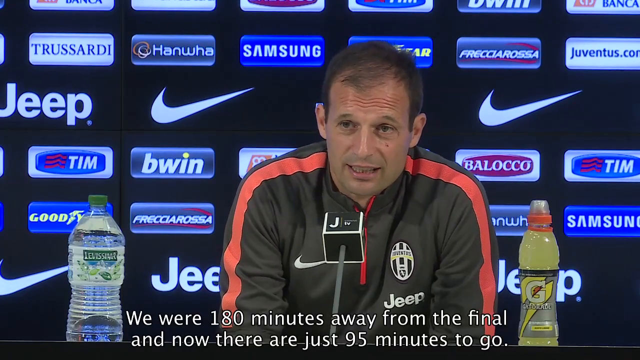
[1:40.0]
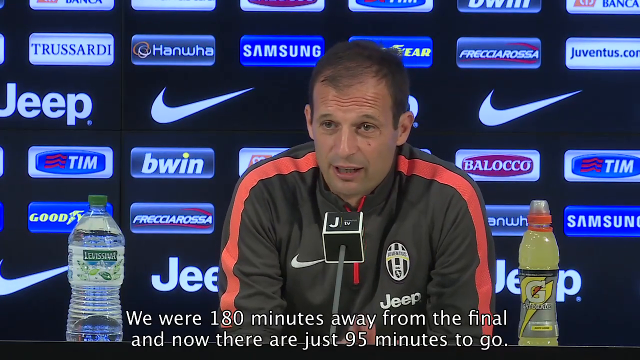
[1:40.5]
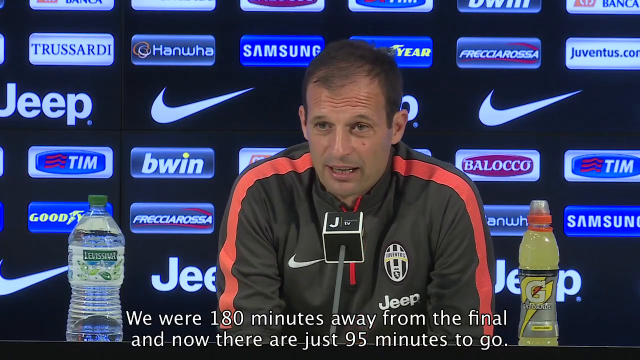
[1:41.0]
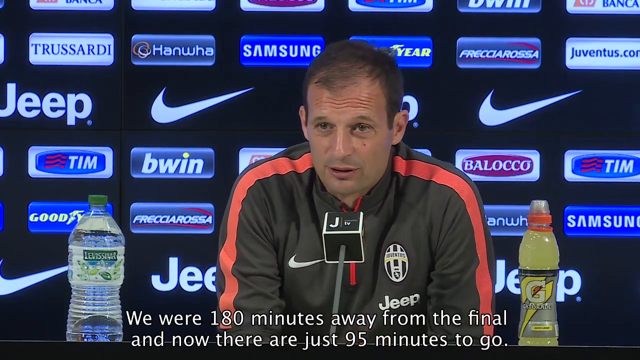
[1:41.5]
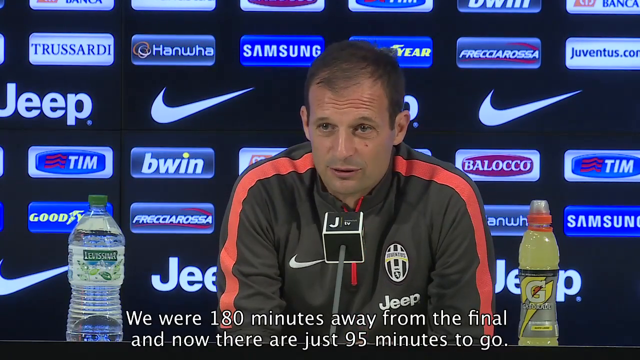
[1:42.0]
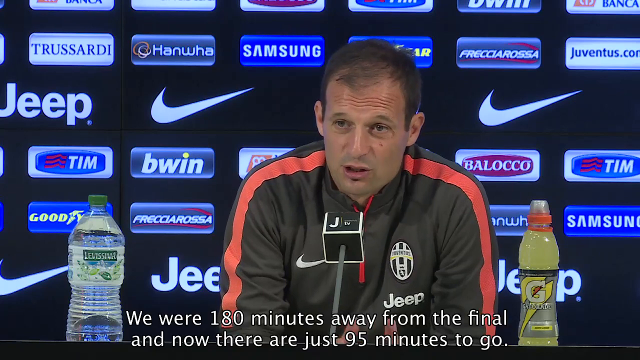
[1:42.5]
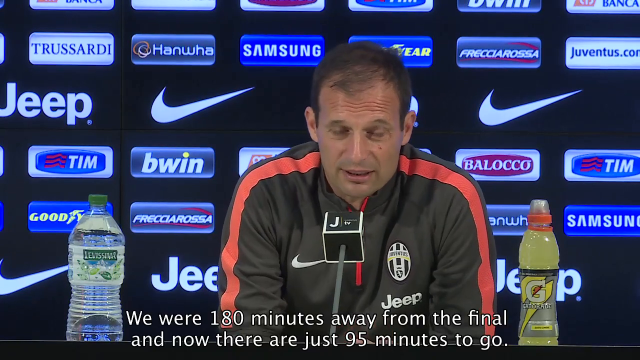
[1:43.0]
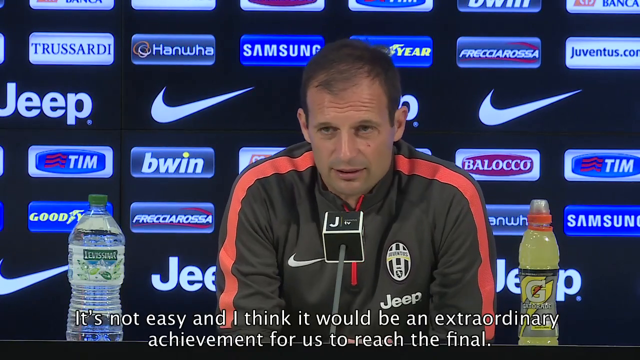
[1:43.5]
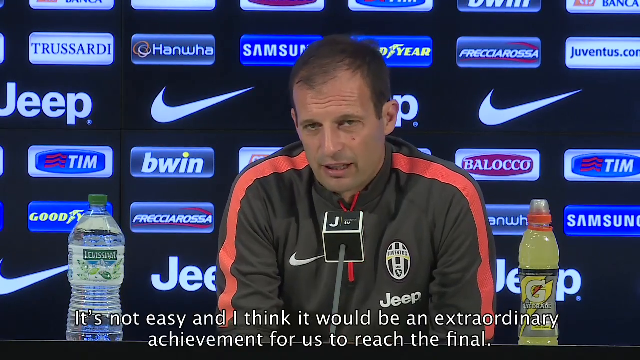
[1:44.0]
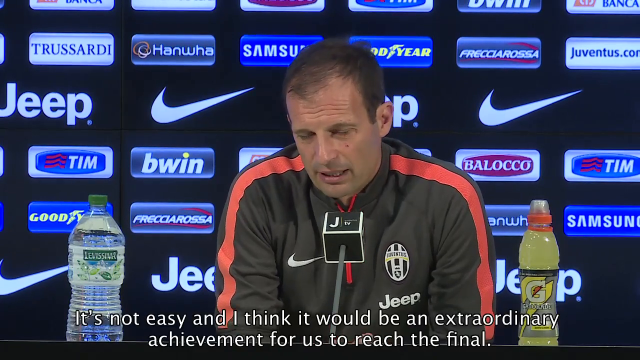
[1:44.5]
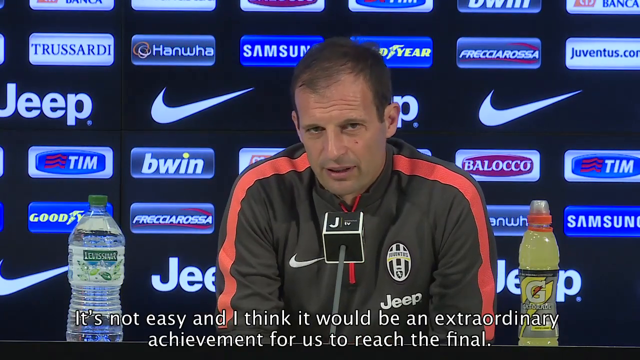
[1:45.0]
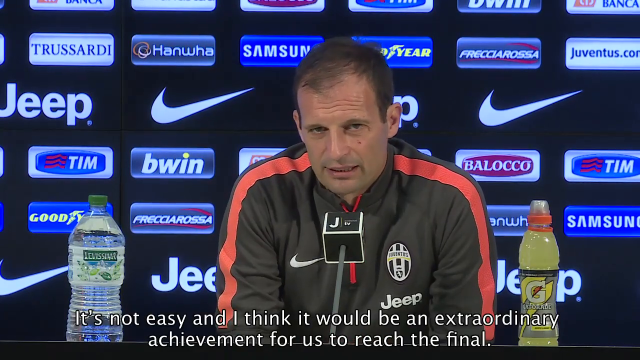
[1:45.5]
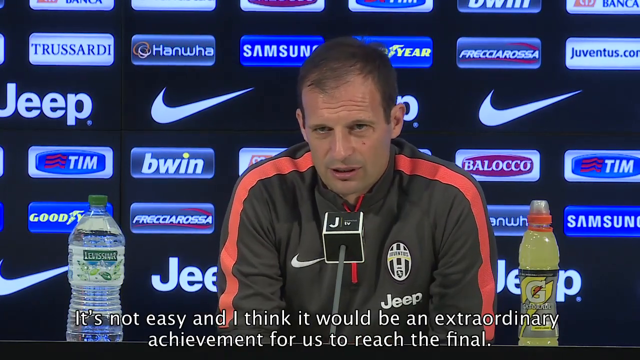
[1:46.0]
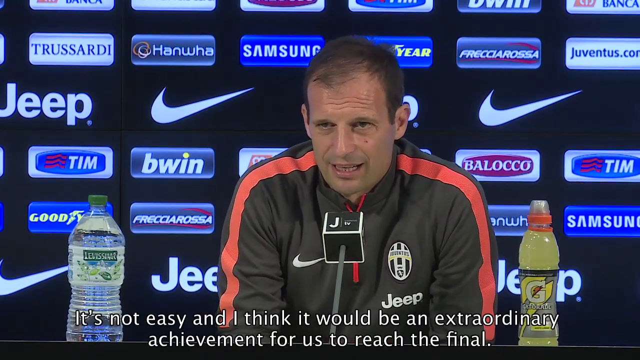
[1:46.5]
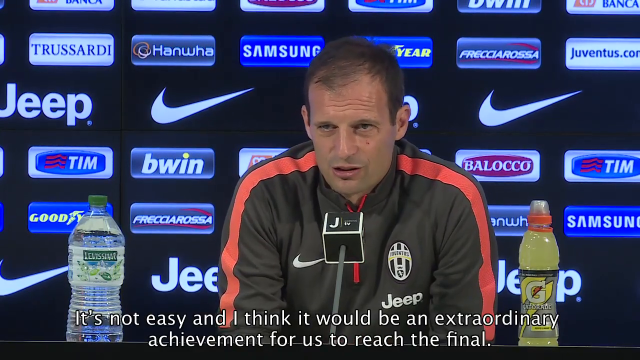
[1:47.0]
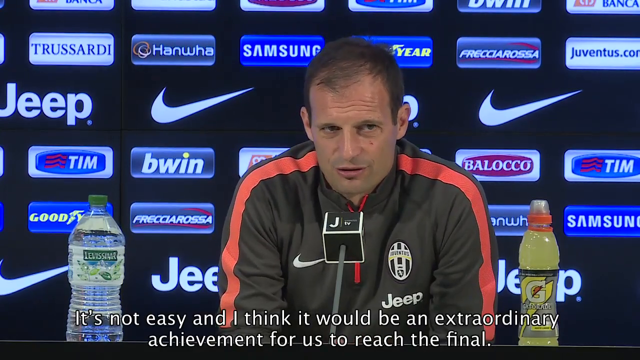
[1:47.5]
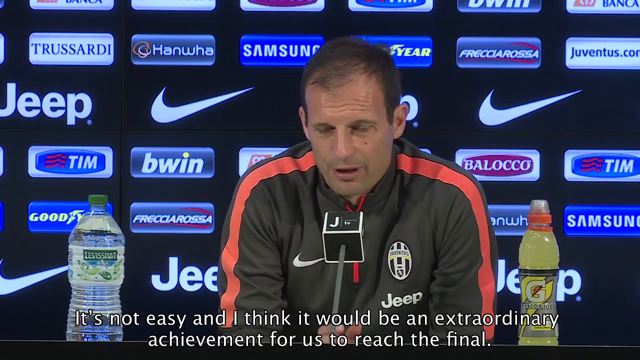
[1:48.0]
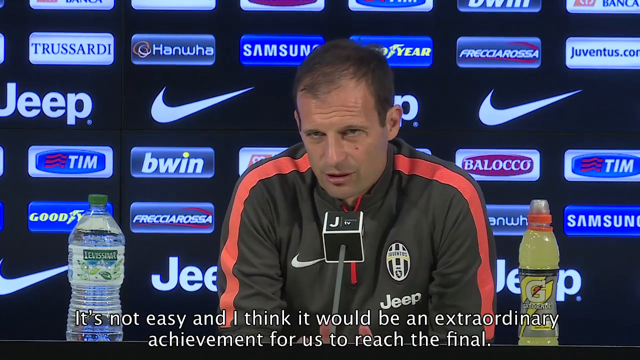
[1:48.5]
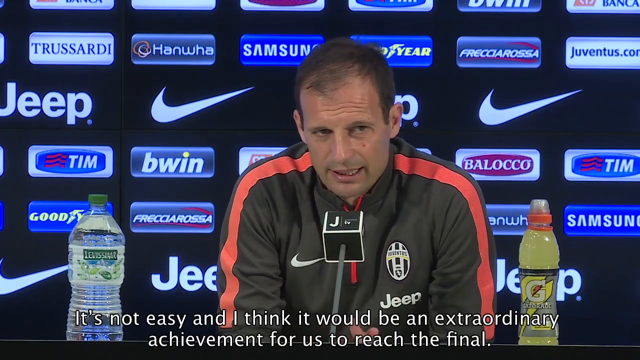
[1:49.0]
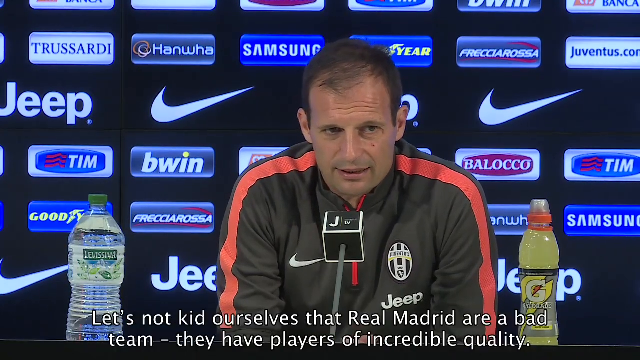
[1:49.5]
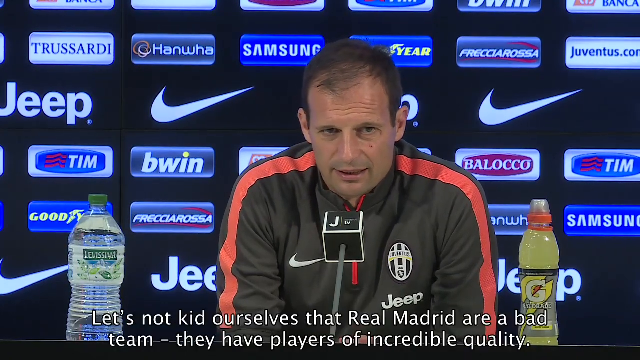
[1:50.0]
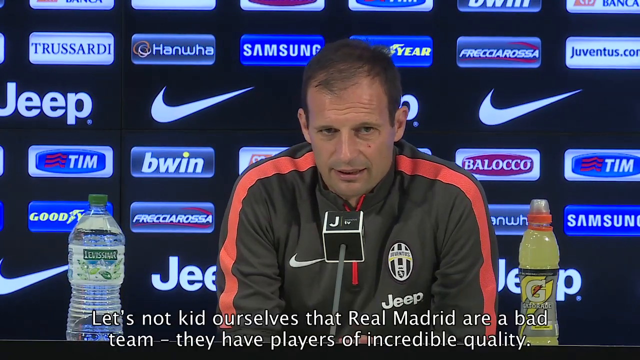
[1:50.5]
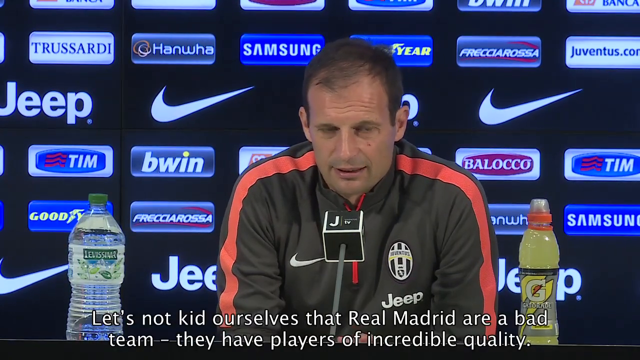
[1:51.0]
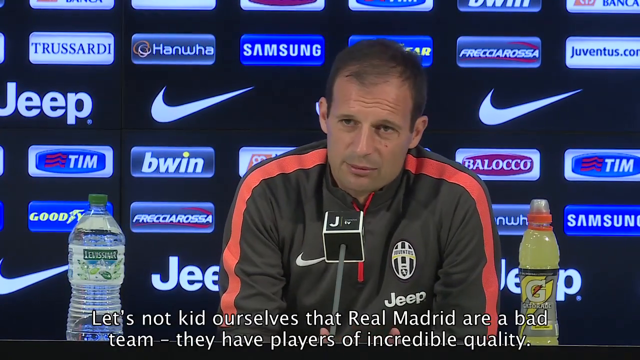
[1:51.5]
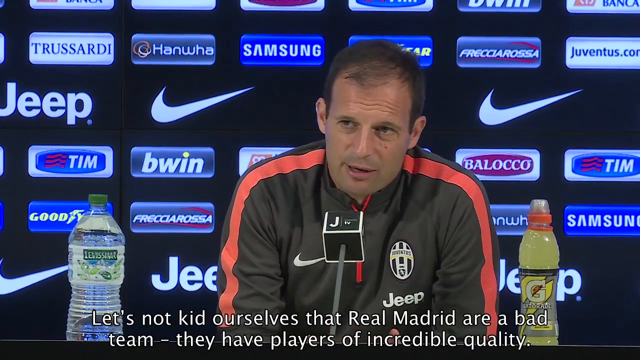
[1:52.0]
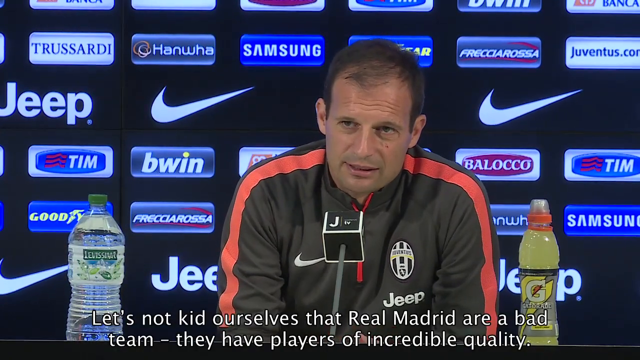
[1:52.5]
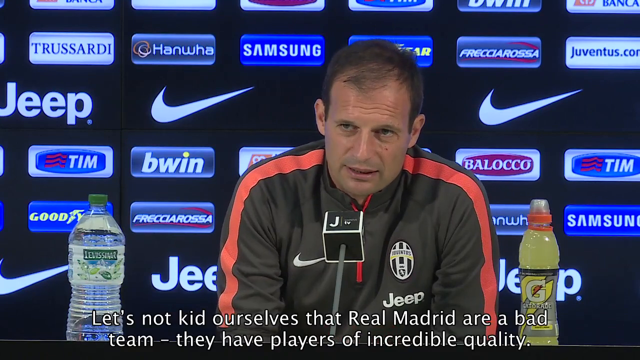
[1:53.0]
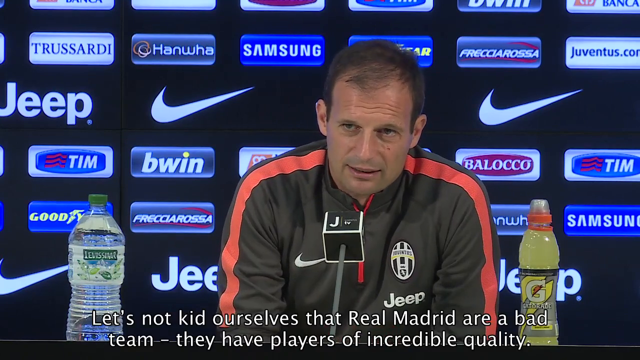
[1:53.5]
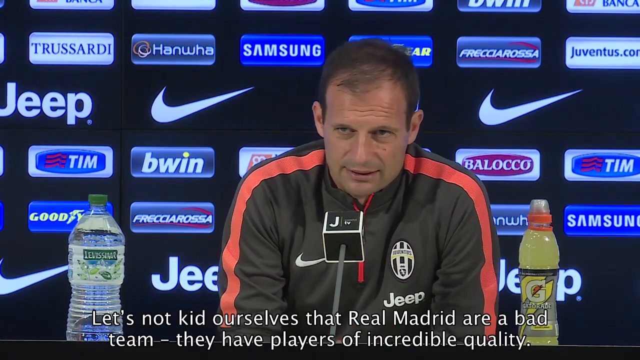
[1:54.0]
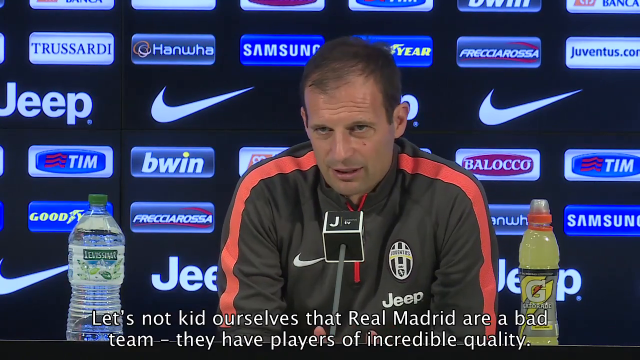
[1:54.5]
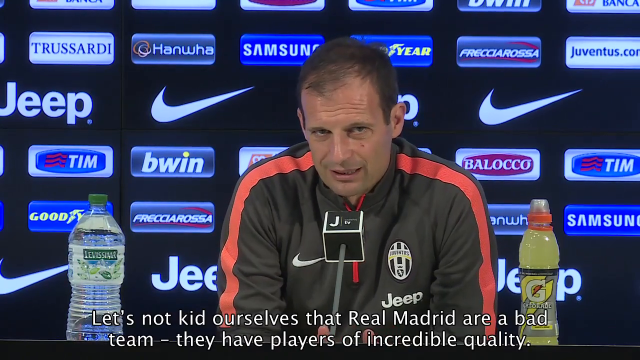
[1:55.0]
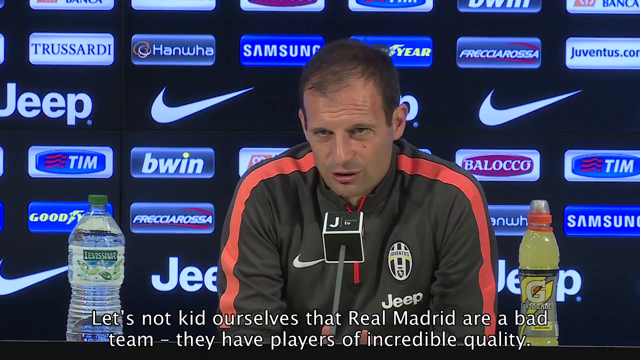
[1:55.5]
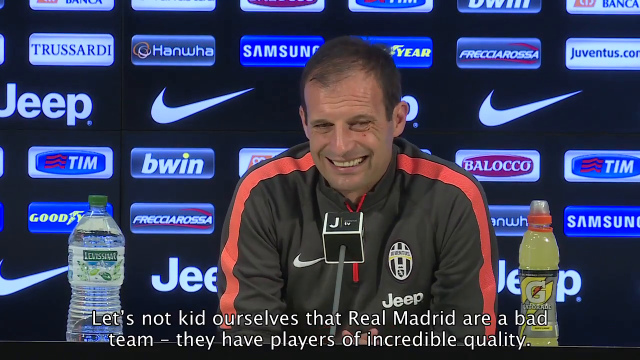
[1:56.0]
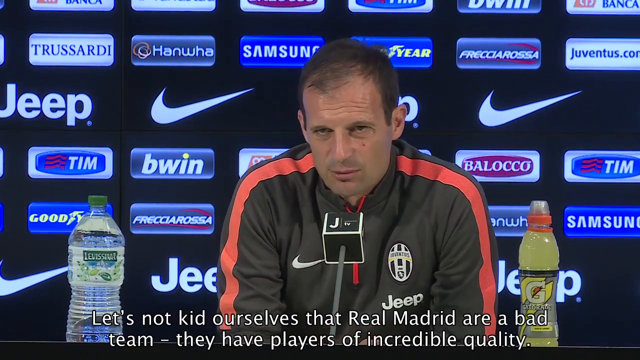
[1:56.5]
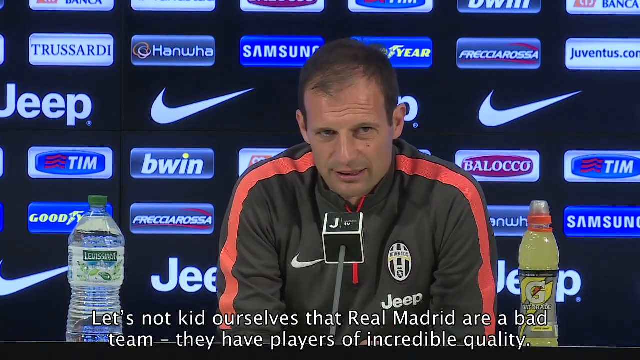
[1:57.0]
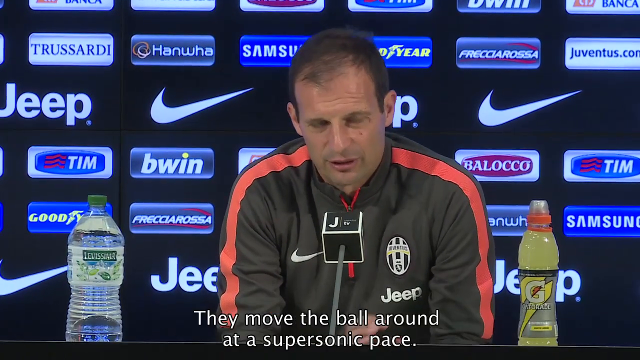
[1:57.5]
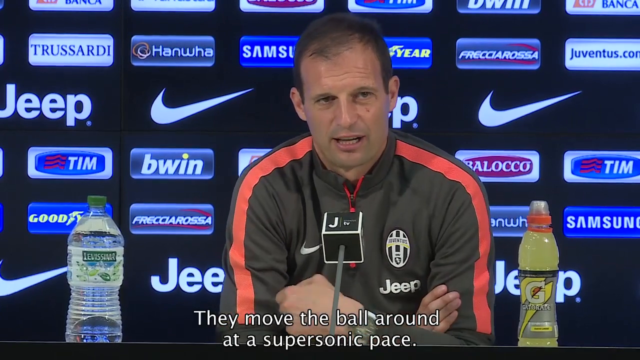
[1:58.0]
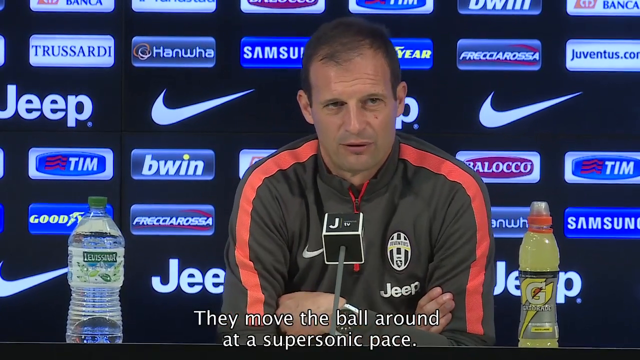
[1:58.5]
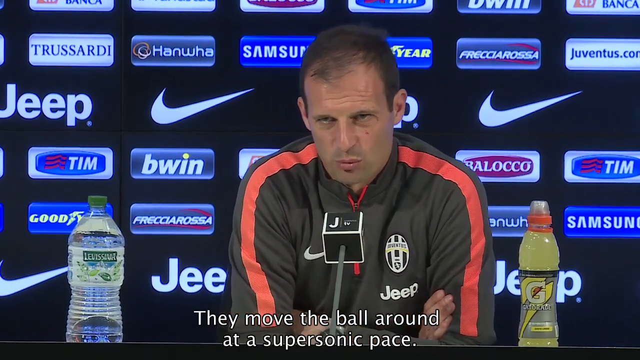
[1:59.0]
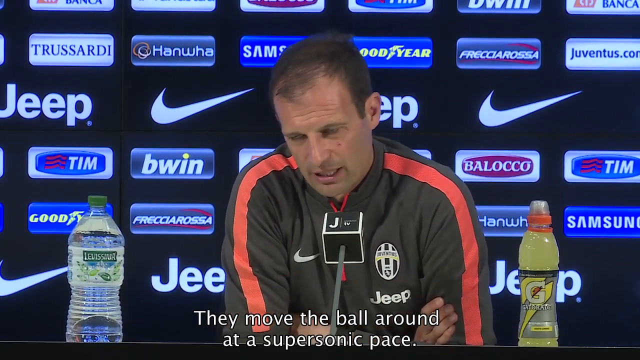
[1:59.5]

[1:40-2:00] The man talking, apparently the coach, has short, balding, brownish hair. His eyes are hard to see in this light; they might be dark blue, dark green or possibly hazel. He has a large round brown mole under his left eye on his cheek, about halfway between his ear and the bridge of his nose. He is clean shaven, with a visible shadow where his beard would be. He is still leaning on his elbows as he talks, now saying, "it's not easy and I think it would be an extraordinary achievement for us to reach the final. Let's not kid ourselves that Real Madrid are bad team, they are players of incredible quality. They move the ball around at a supersonic speed." The bottle of juice to the man's left has a large white letter G on its label, possibly indicating Gatorade.